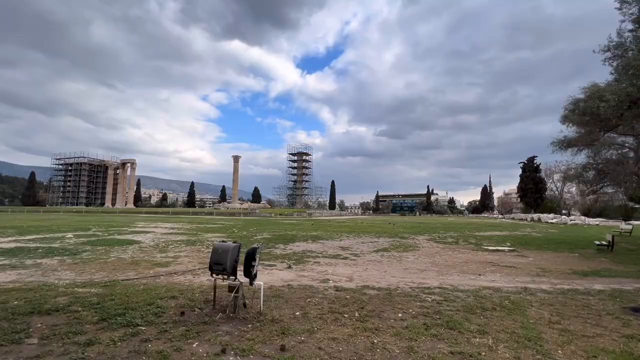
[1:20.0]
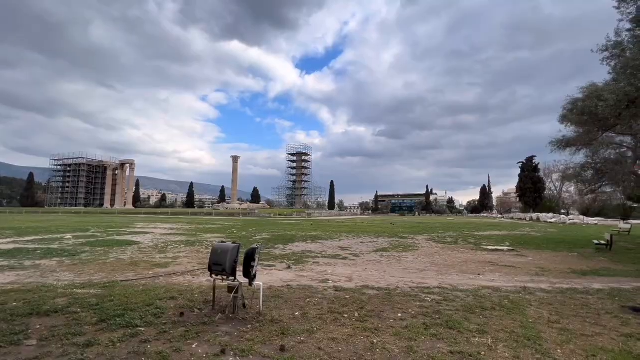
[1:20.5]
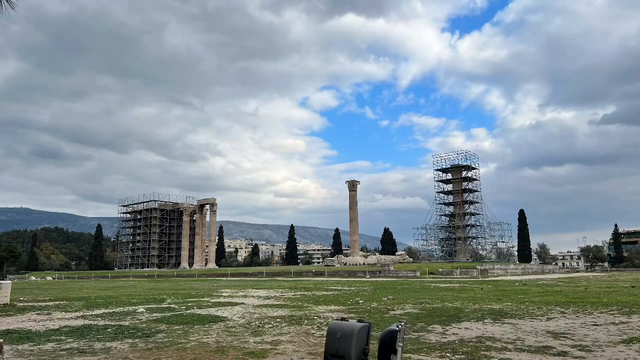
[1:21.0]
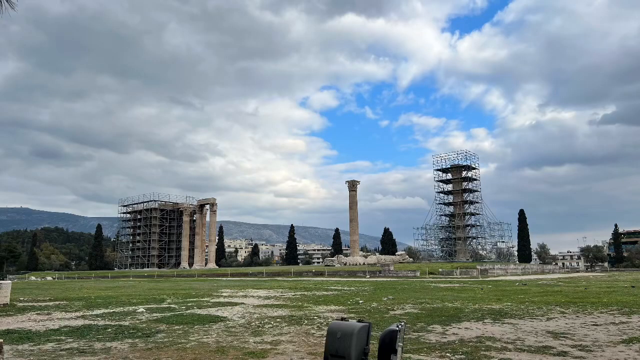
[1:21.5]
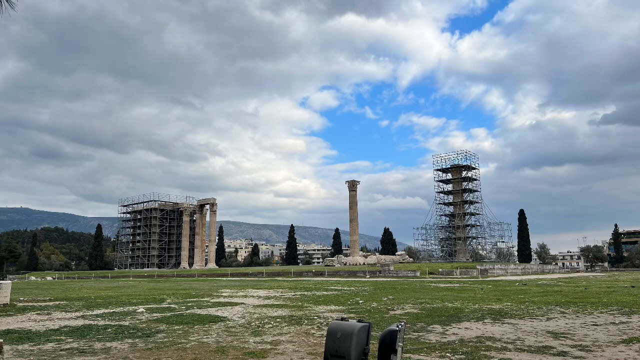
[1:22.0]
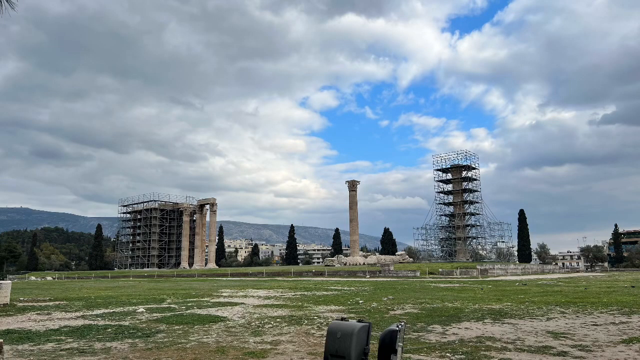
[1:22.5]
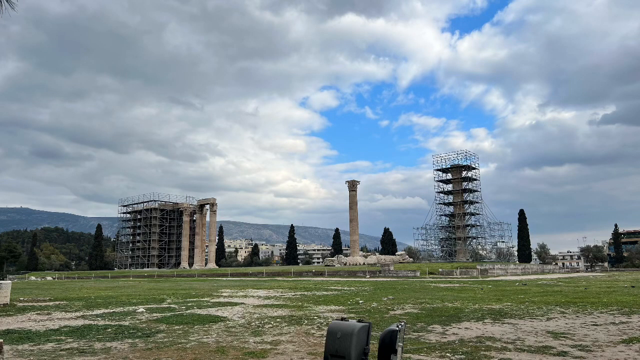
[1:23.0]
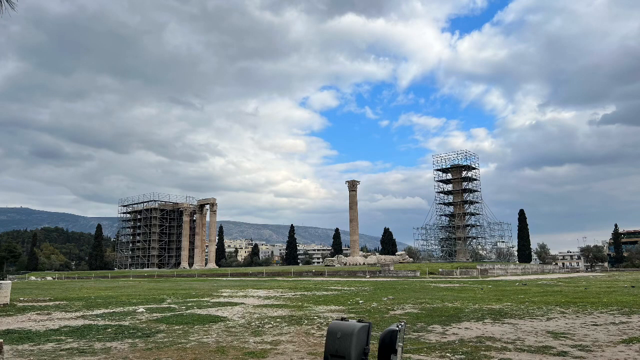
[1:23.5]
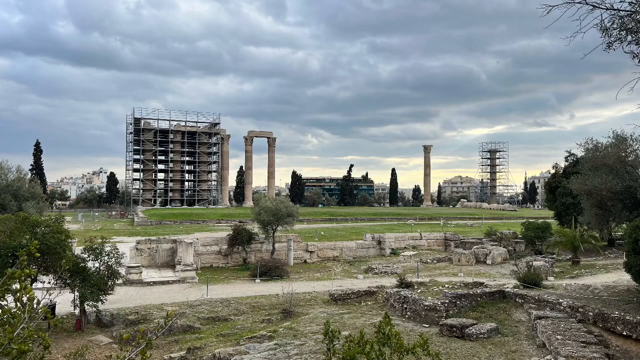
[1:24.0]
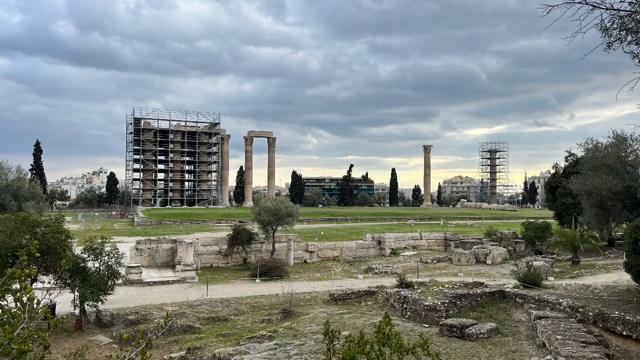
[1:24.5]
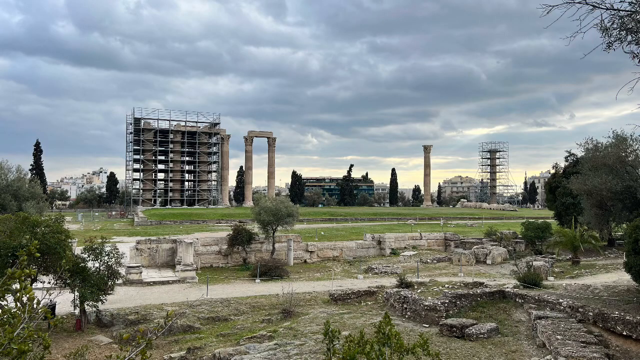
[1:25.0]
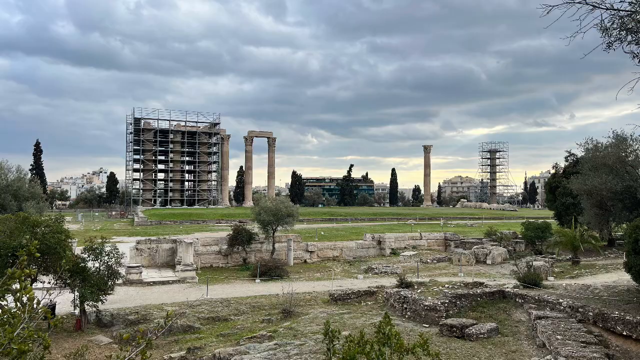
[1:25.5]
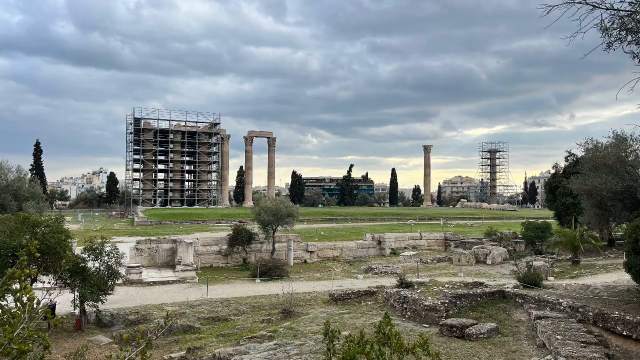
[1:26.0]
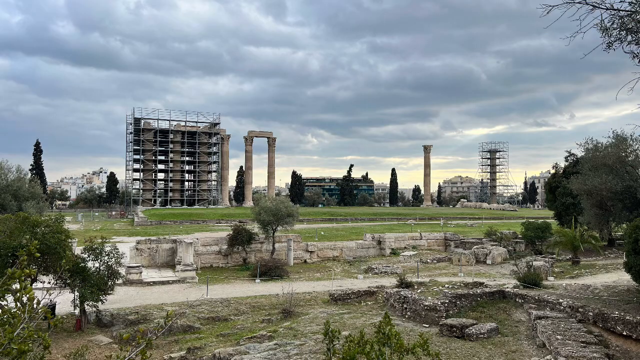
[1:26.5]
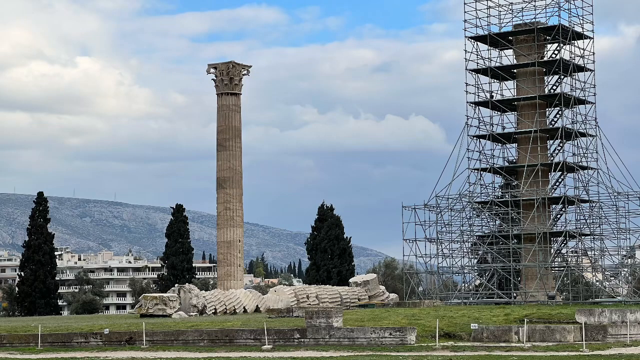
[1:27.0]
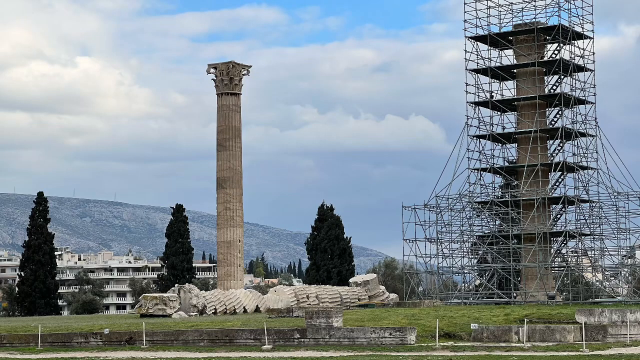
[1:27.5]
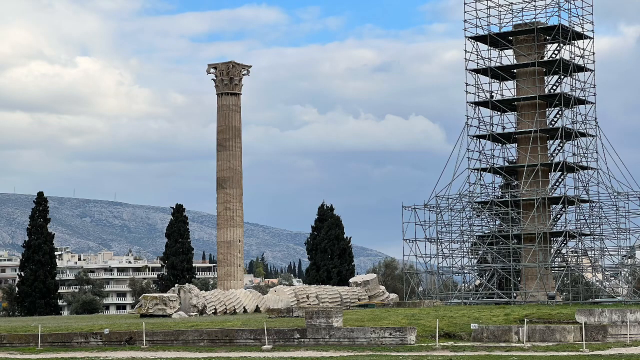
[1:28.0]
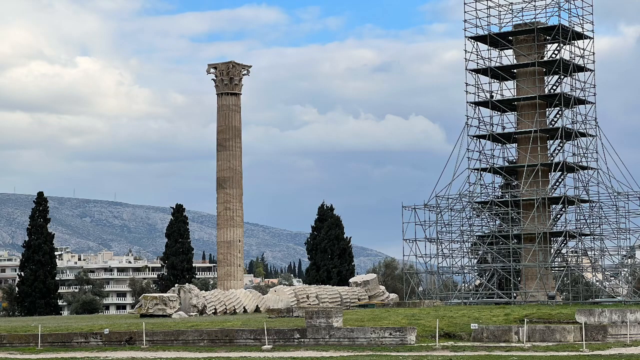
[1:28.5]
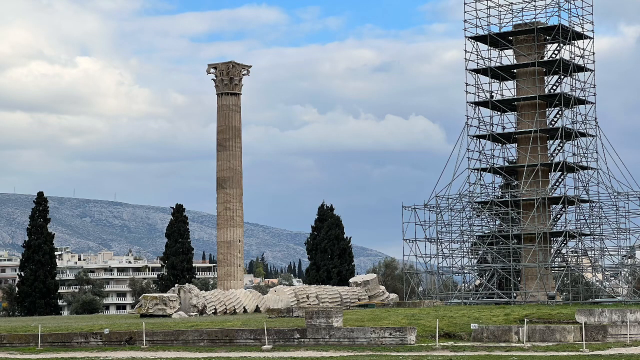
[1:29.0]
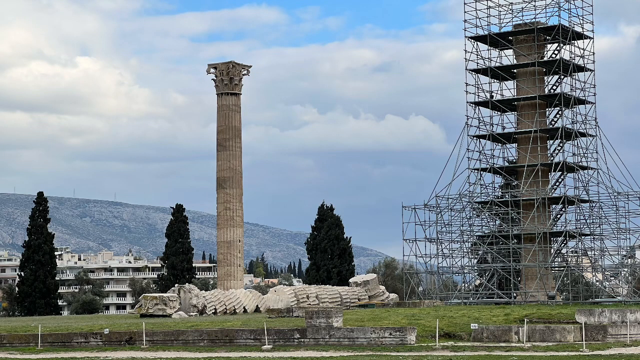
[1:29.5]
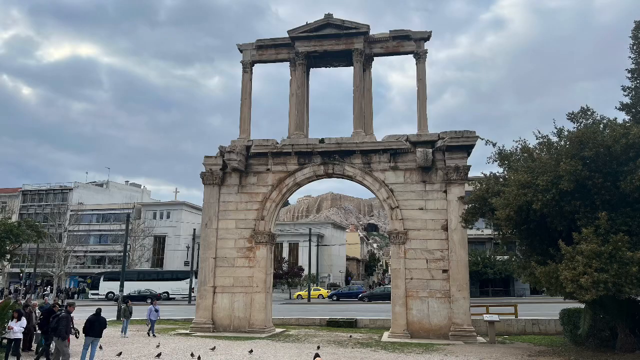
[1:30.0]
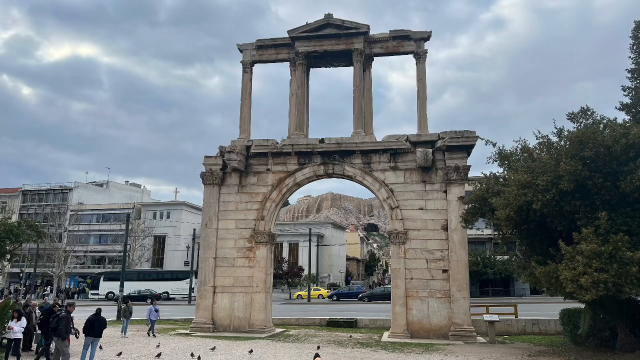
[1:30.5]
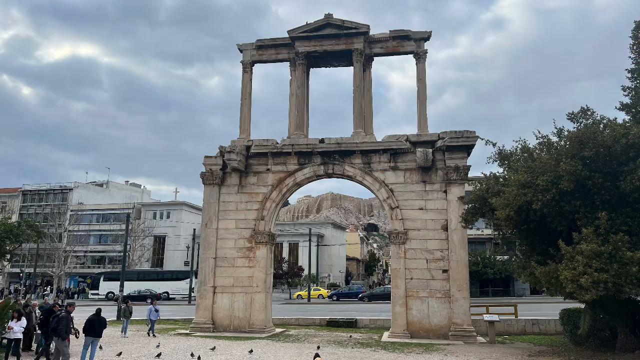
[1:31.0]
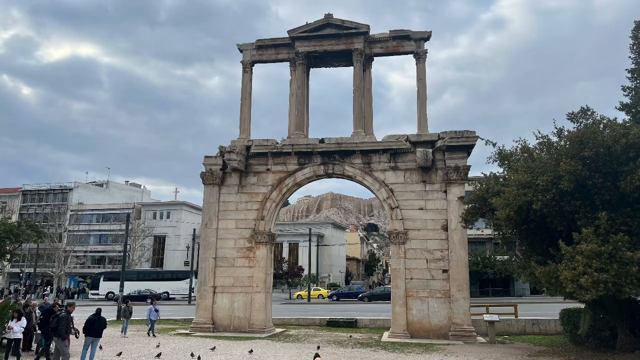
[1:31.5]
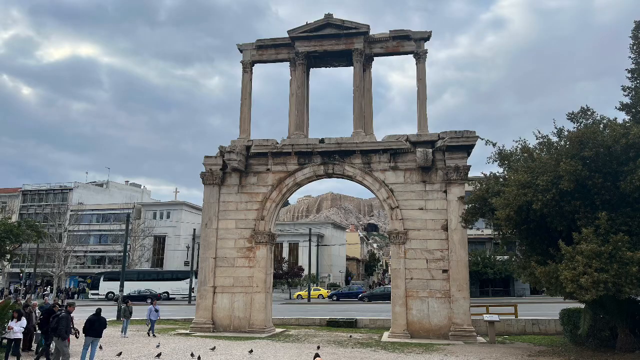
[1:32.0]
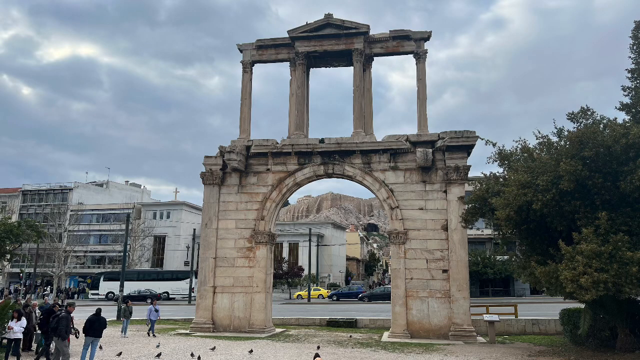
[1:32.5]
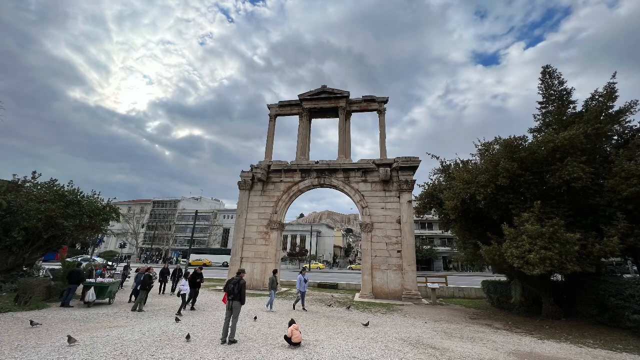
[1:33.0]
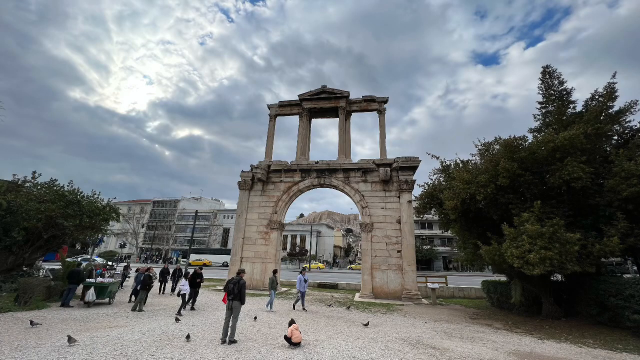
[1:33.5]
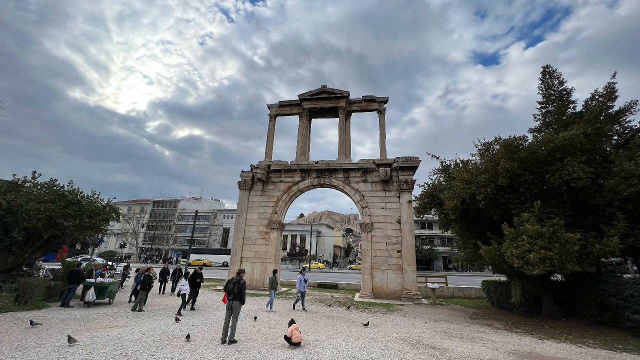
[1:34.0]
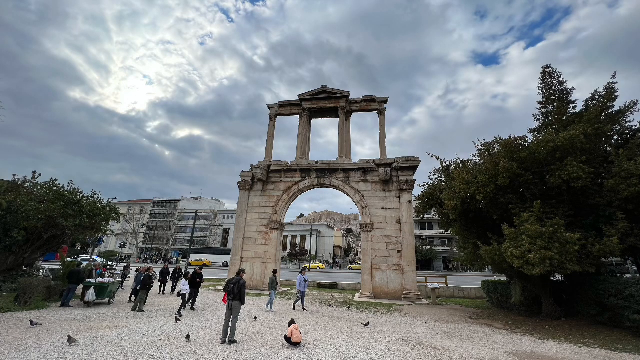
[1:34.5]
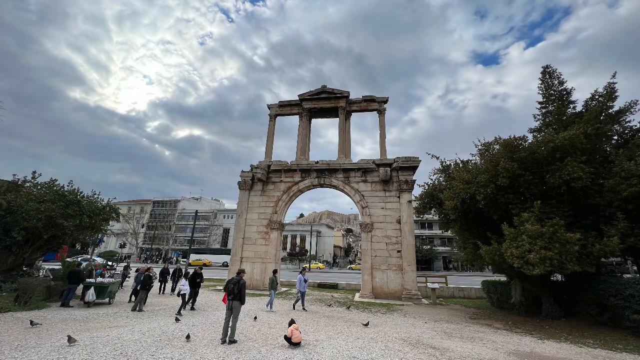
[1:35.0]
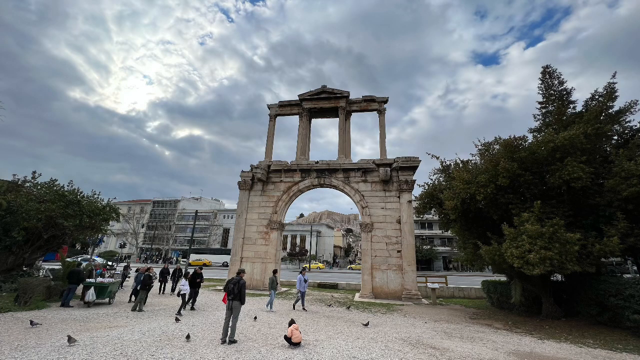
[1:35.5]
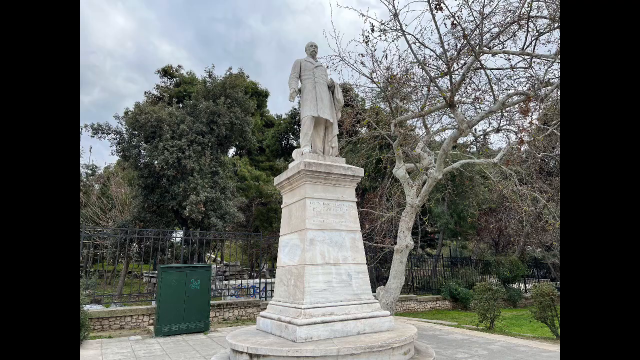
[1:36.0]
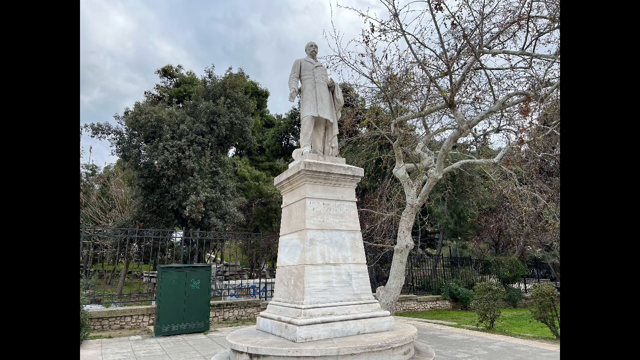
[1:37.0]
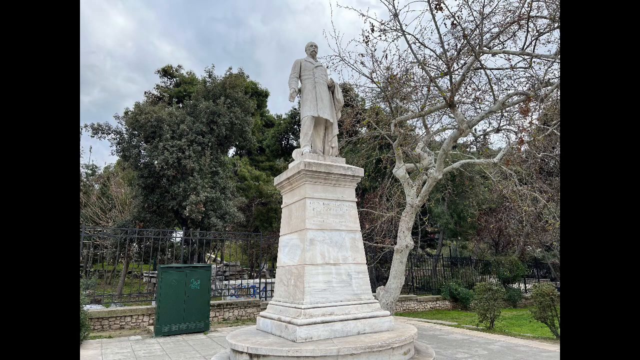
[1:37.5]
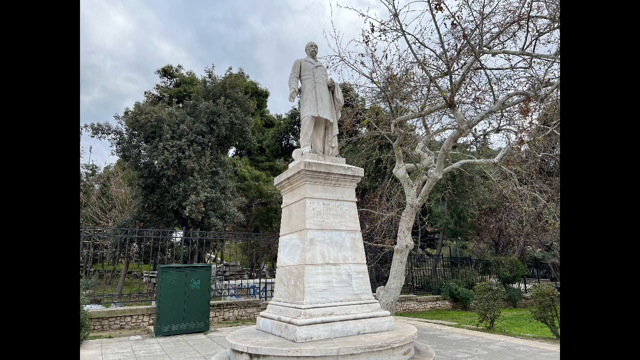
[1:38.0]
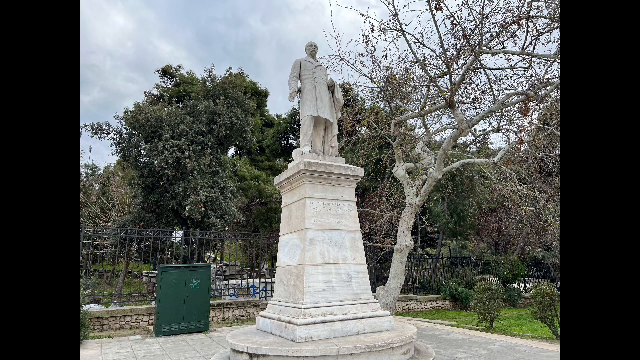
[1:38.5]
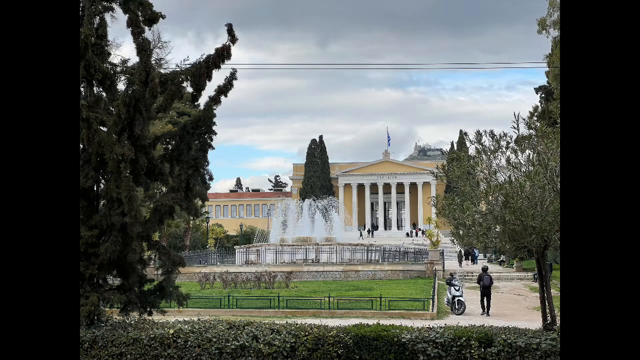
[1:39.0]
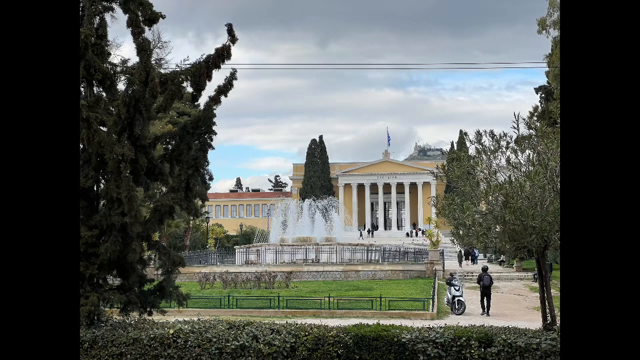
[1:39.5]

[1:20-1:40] Still photographs show the same sites seen earlier: the amphitheater with the Greek flags flying, a cityscape area, the old-looking gate, the columns and the ruins. There is a close-up still of a column with scaffolding next to it, and stills of the gate from a couple of different angles. A new sight appears: a statue of a man standing on top of a large platform or pillar about his own height, with a tree next to him and trees around him, apparently in a park; the man is not identified. After the statue, a picture shows what looks like an old mansion or residence, a peach-colored stately house with white columns in front.